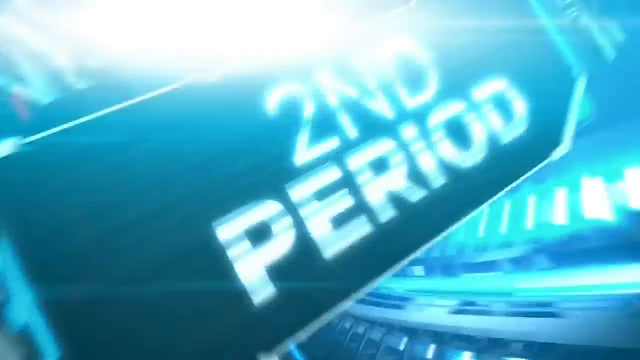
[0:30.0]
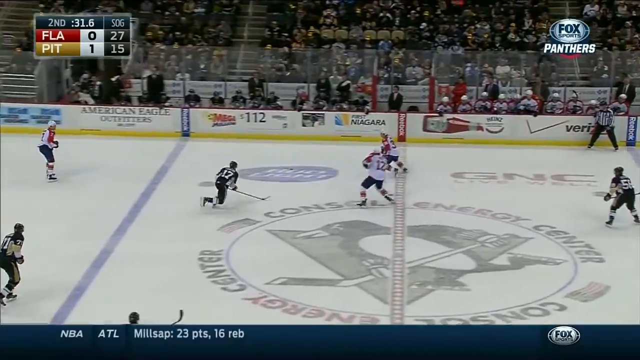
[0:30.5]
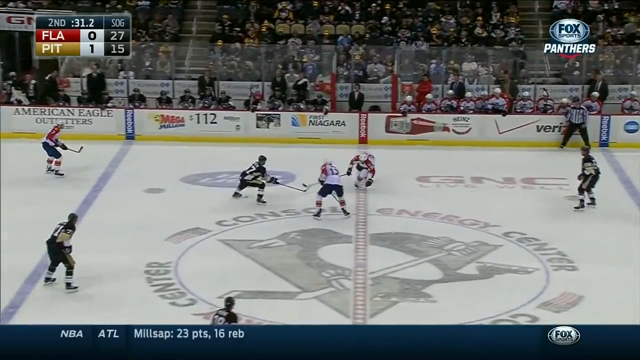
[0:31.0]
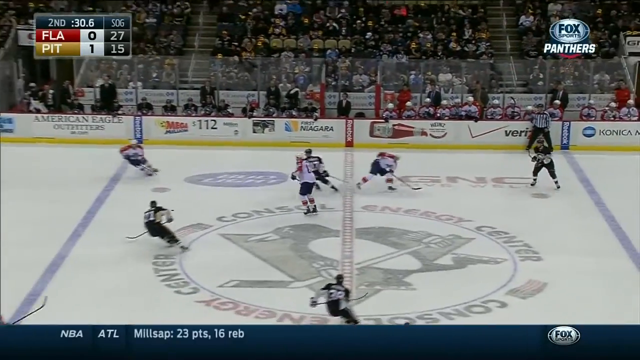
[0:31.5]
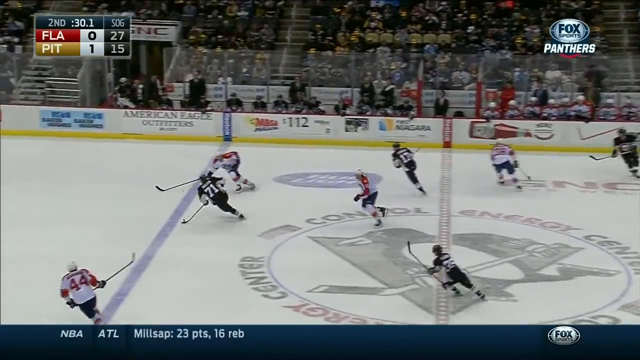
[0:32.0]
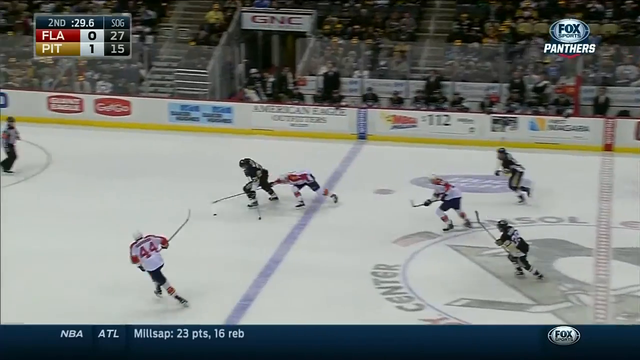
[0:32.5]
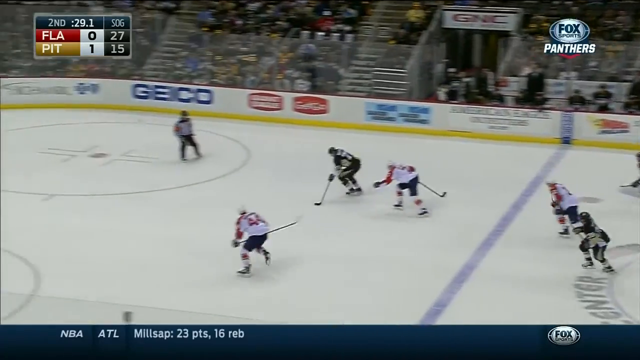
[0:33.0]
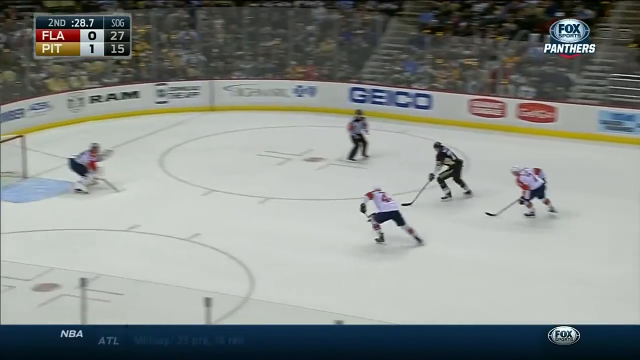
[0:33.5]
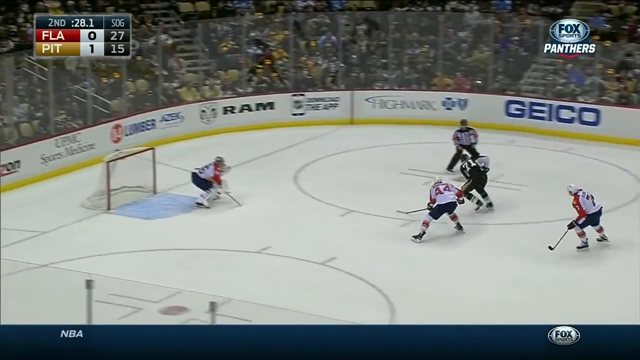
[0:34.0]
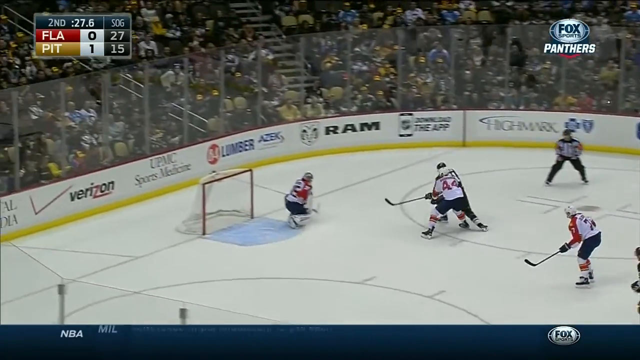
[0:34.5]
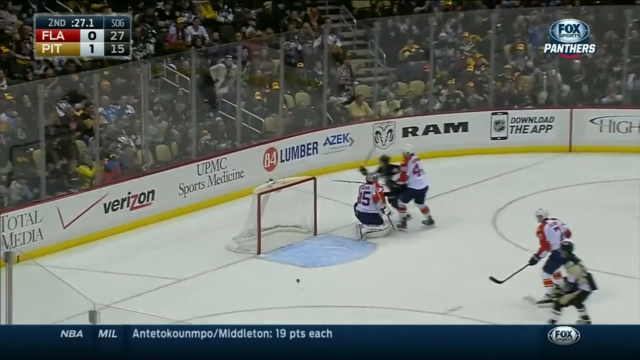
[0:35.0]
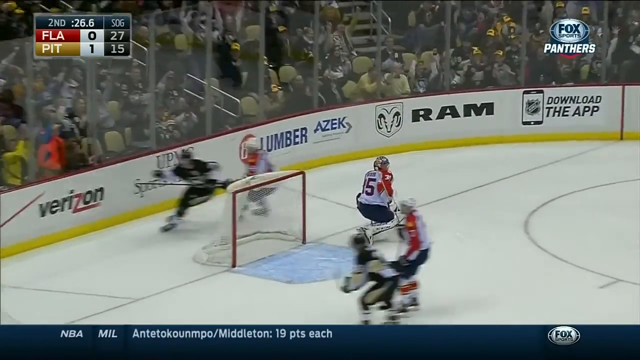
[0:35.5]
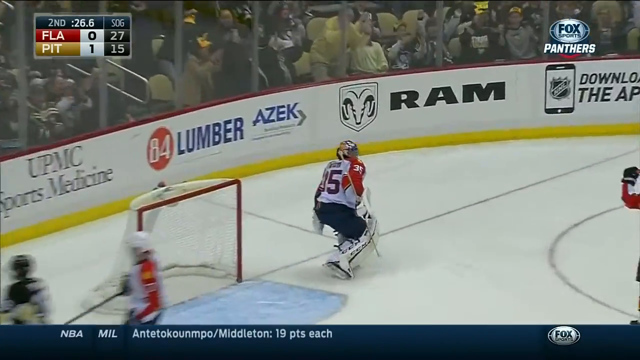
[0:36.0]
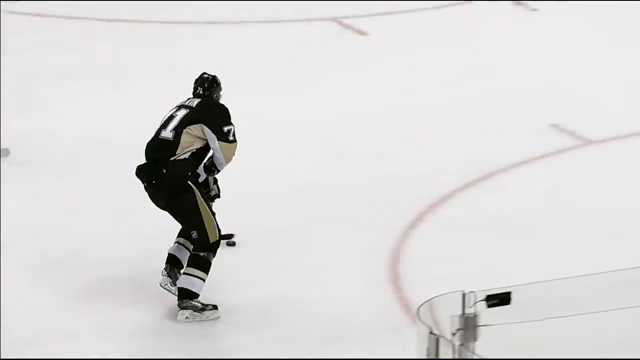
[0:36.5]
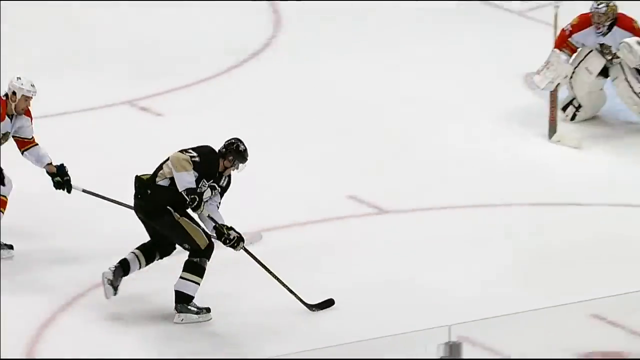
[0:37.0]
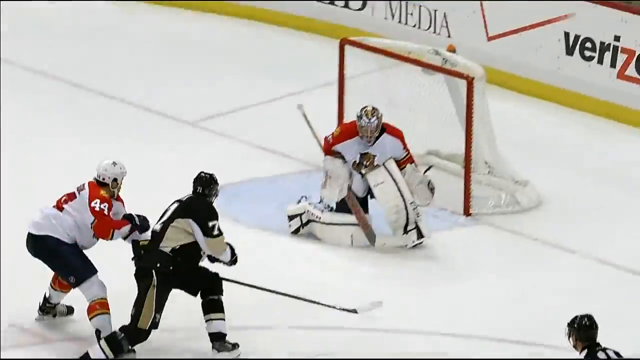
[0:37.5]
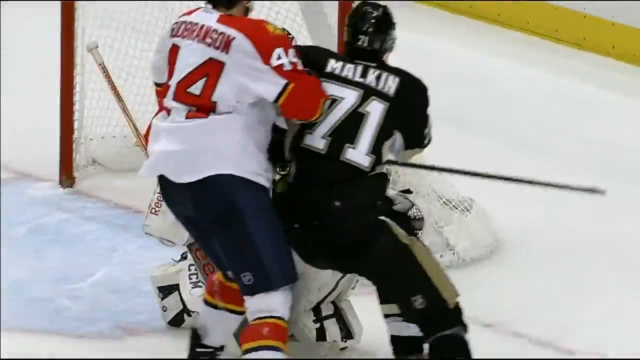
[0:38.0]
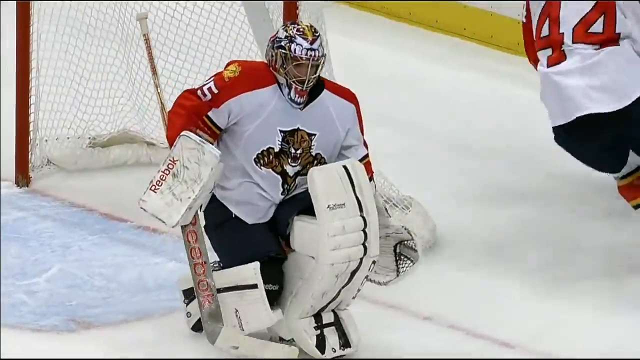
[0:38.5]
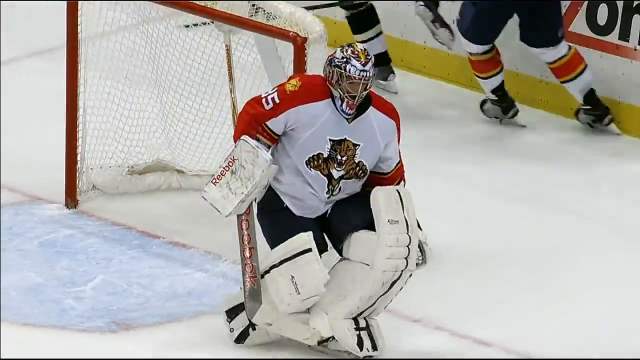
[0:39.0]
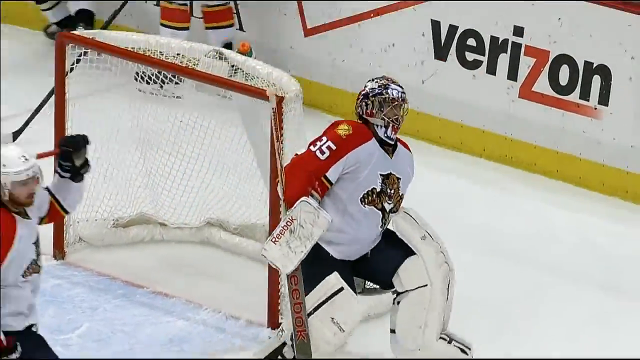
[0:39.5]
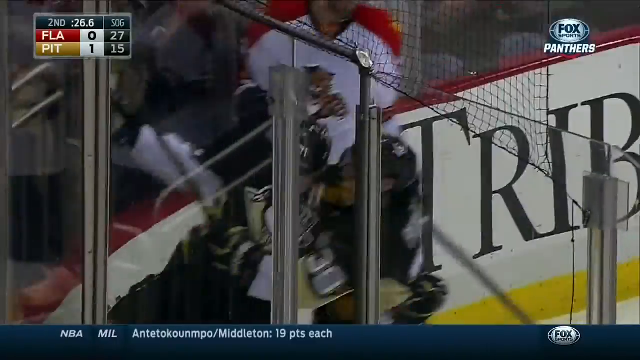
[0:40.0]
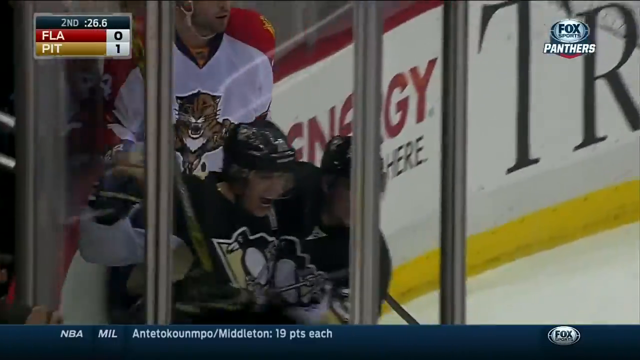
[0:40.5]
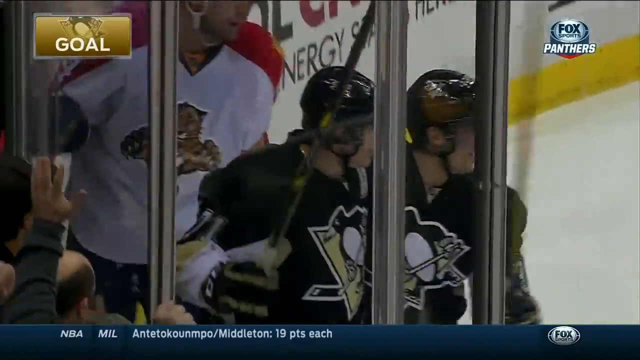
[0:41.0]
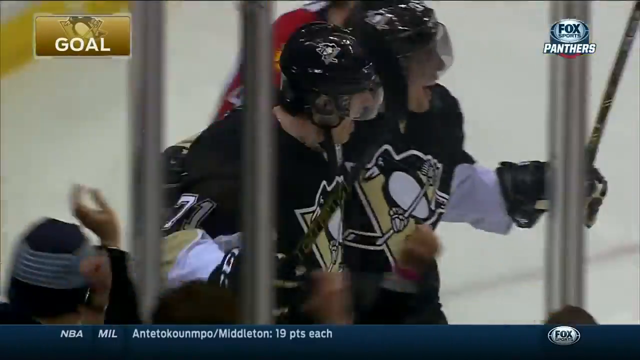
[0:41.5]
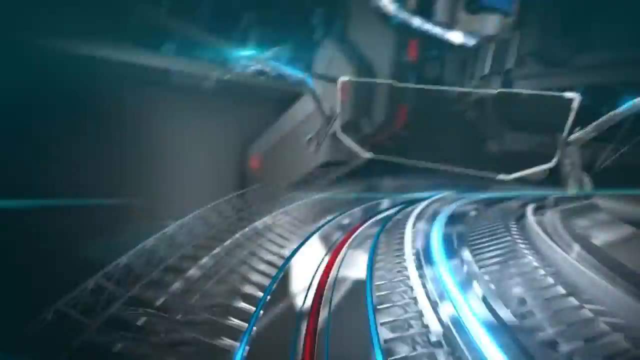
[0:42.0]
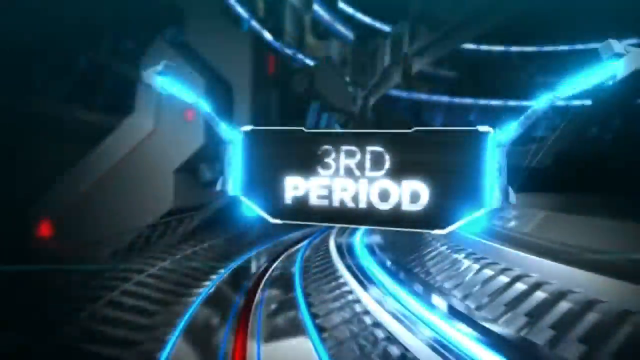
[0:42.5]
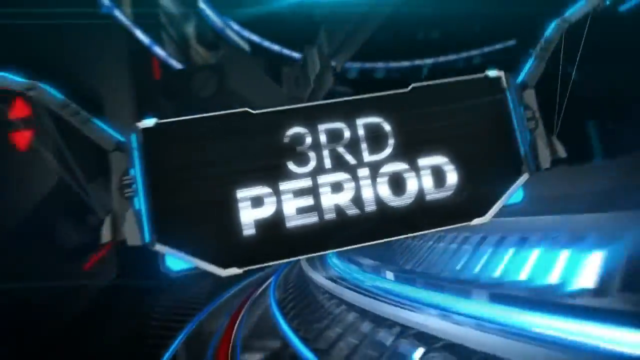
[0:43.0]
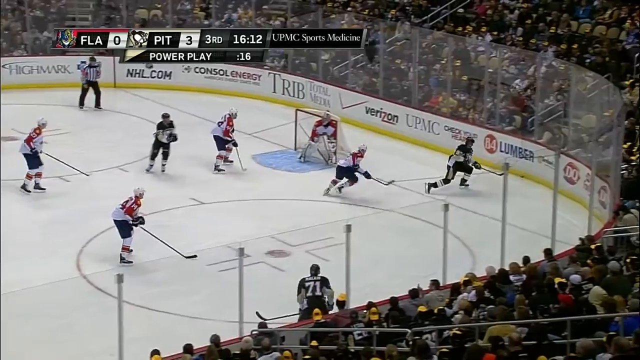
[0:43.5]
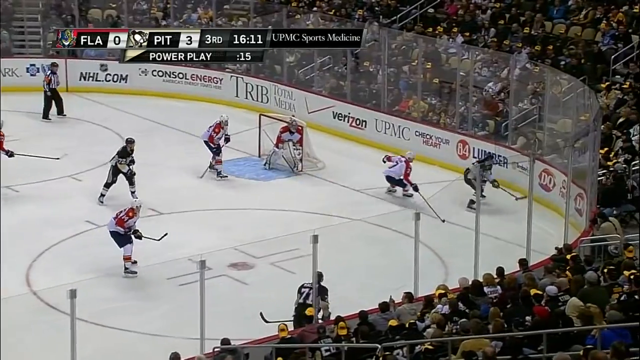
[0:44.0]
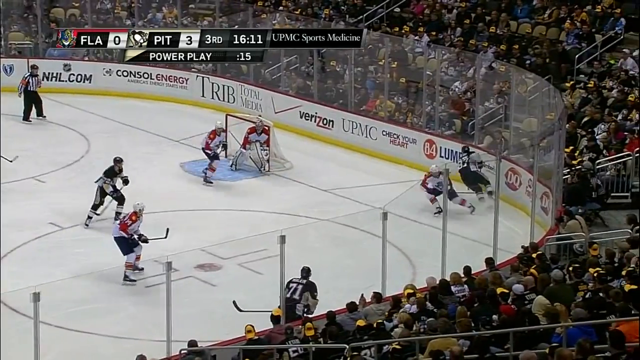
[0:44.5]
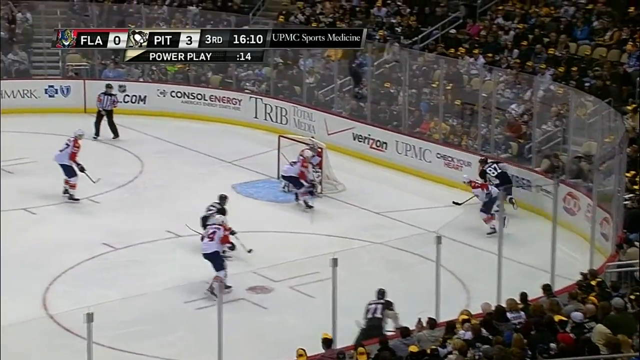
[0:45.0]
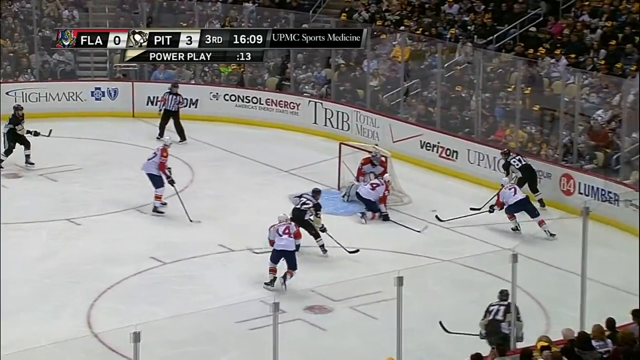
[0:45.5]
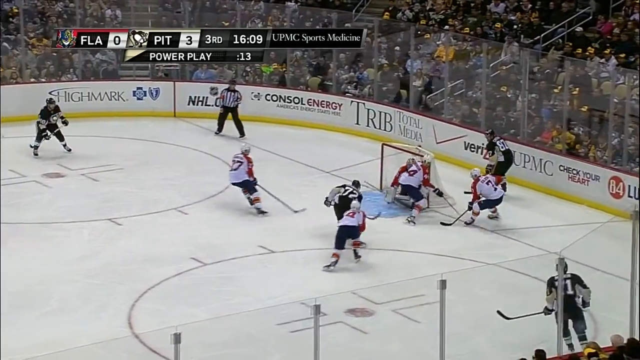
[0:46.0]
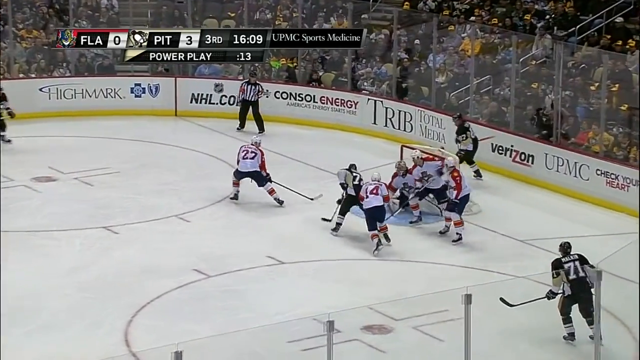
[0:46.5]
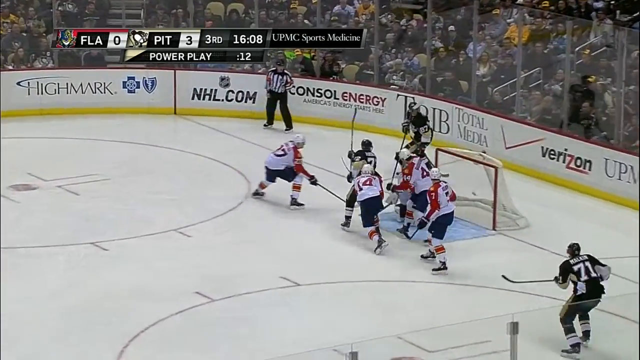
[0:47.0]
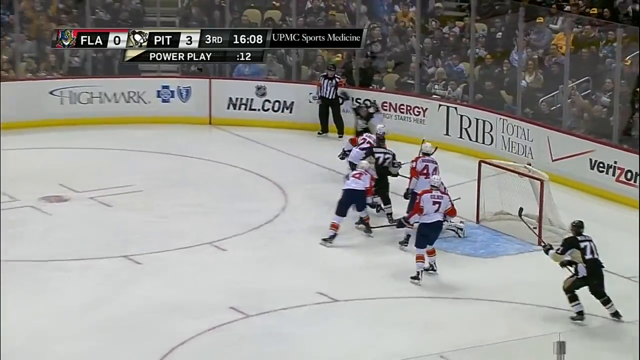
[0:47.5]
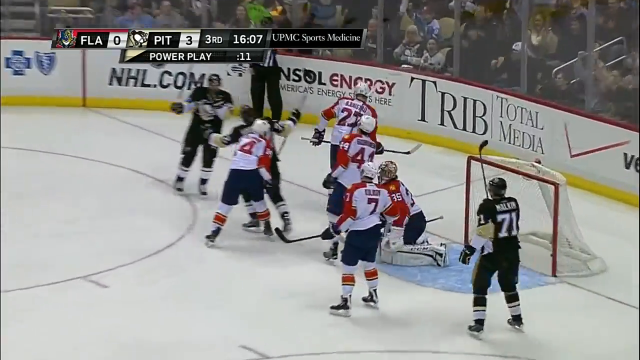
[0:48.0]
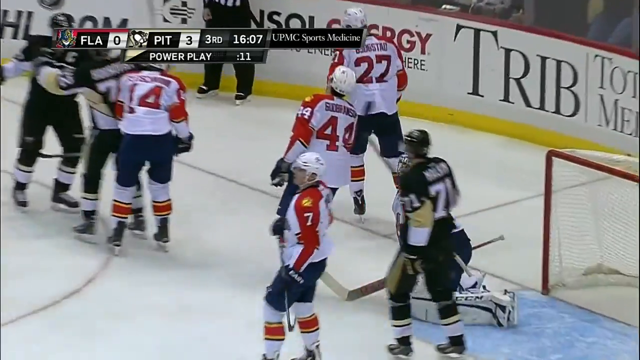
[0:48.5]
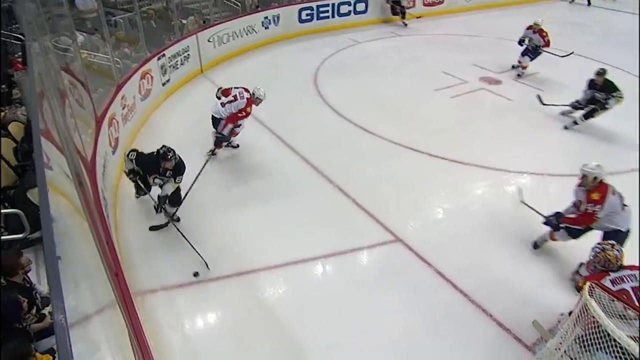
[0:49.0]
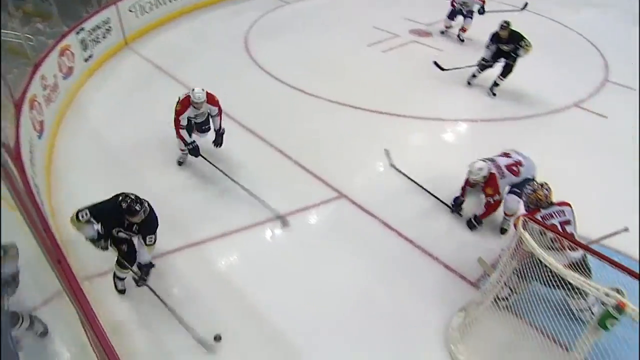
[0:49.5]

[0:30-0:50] Two teams play hockey against each other, one wearing red, black and white and the other wearing black and cream. They fight for the ball on a white ground, and the keeper has just missed the ball as it passed through him. There are white fences at the edge of the ground, and at two corners there are gates, one to the left and one to the right. The players use hockey sticks to push the ball in favour of their team so that they can score goals. They run around the pitch, and at the centre of the pitch there is a logo in grey. All the players rush for the ball while the packed ground watches the game.